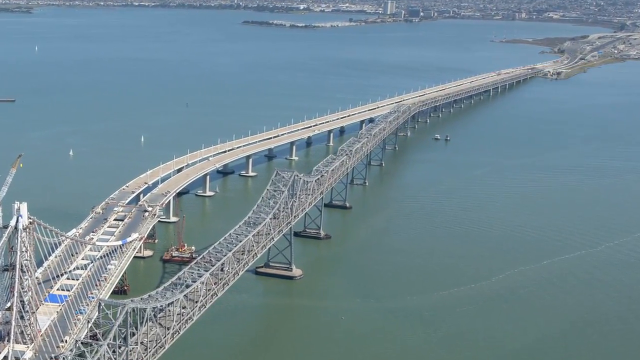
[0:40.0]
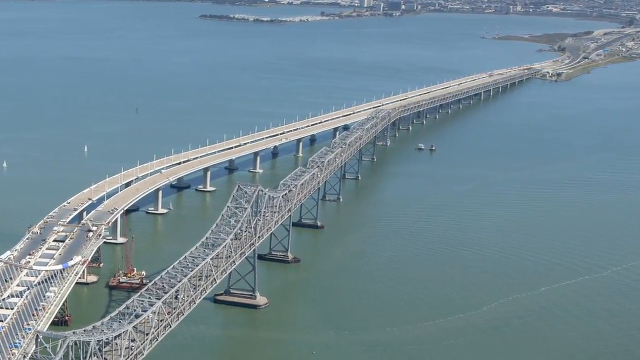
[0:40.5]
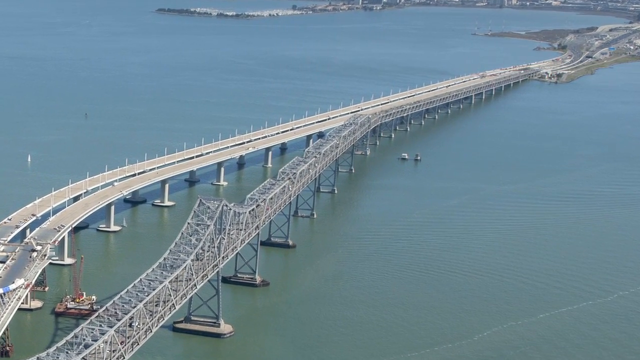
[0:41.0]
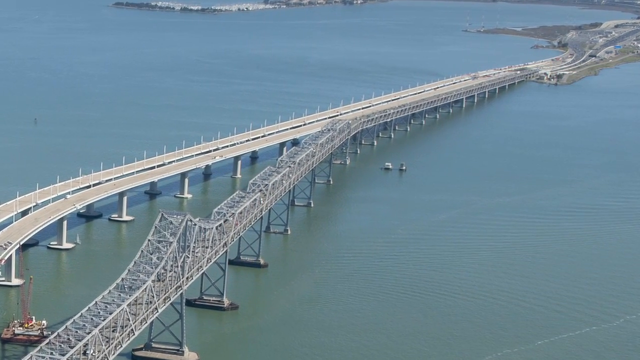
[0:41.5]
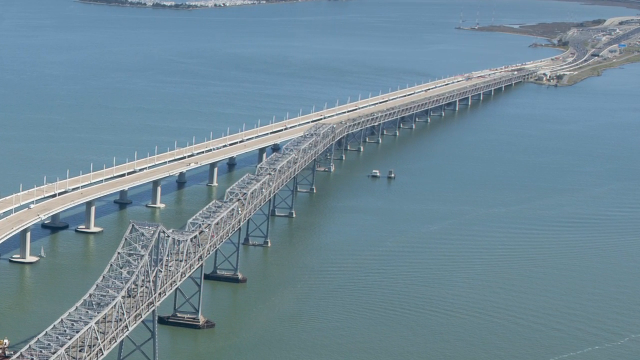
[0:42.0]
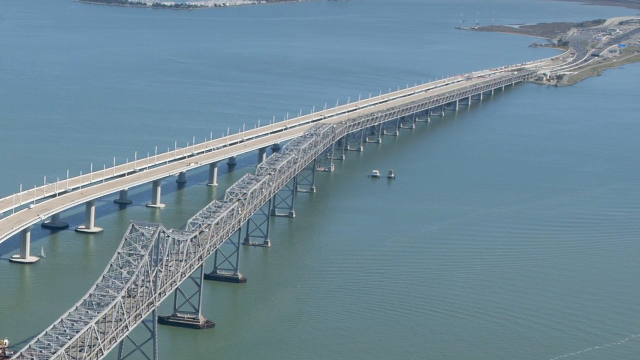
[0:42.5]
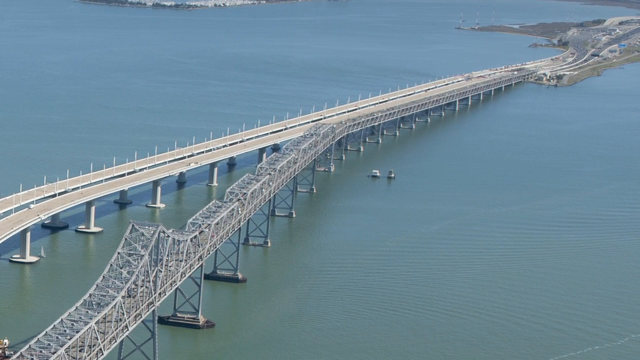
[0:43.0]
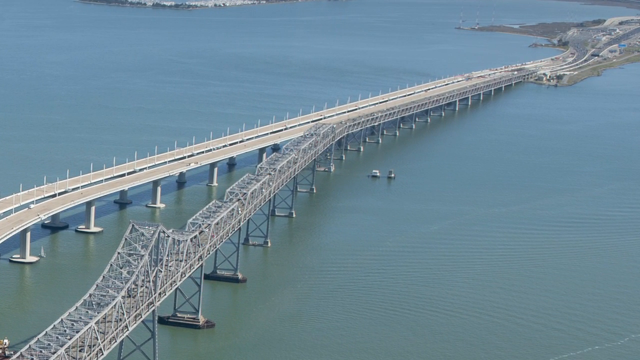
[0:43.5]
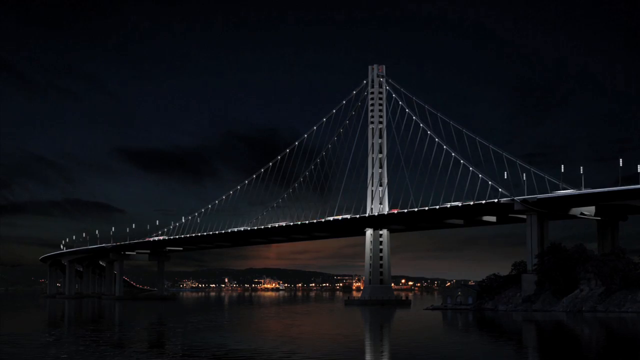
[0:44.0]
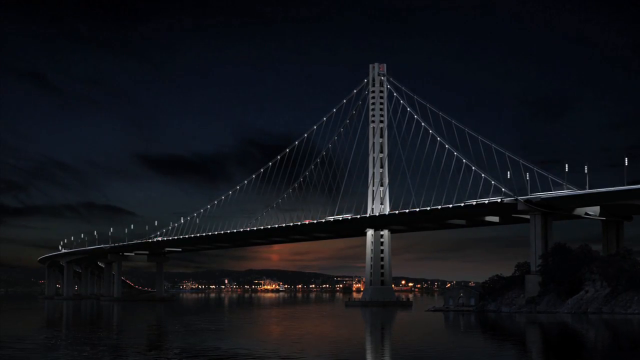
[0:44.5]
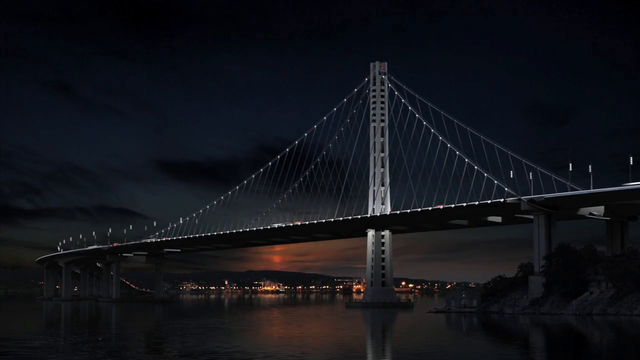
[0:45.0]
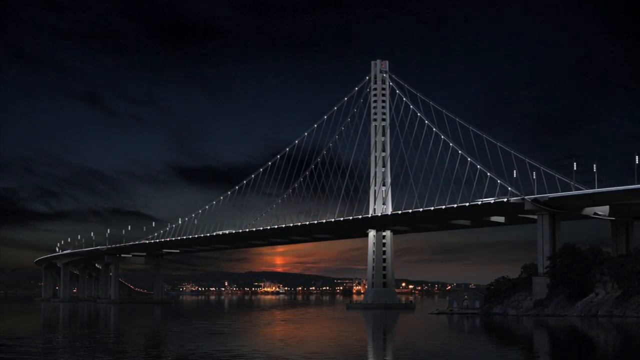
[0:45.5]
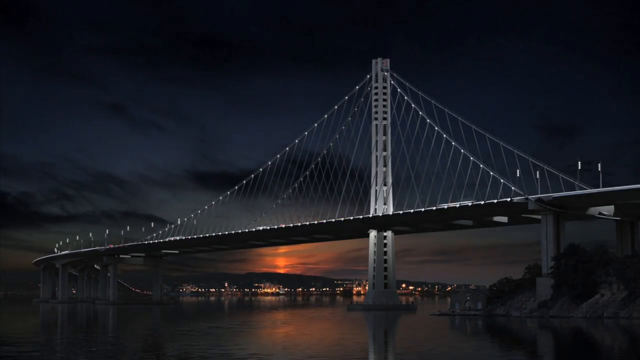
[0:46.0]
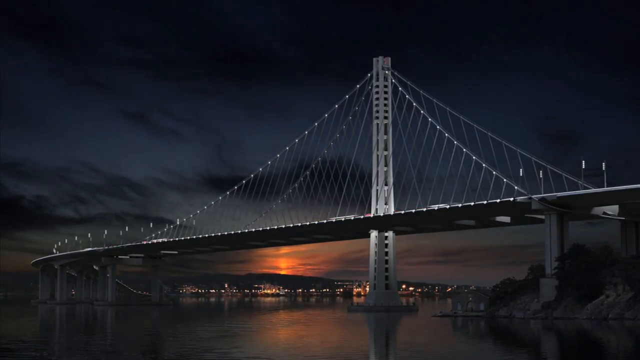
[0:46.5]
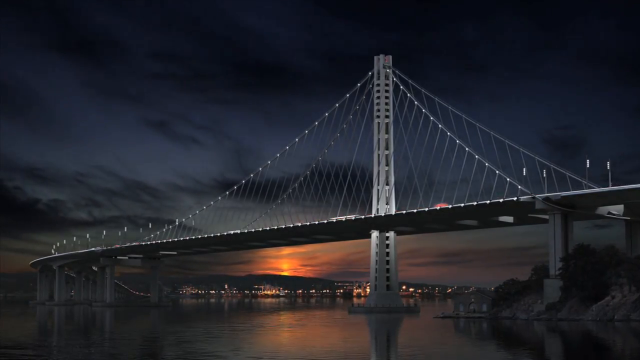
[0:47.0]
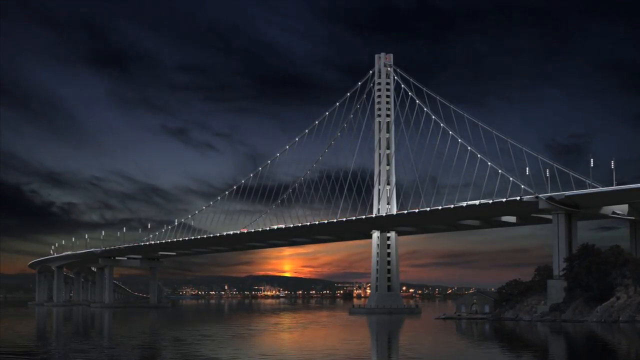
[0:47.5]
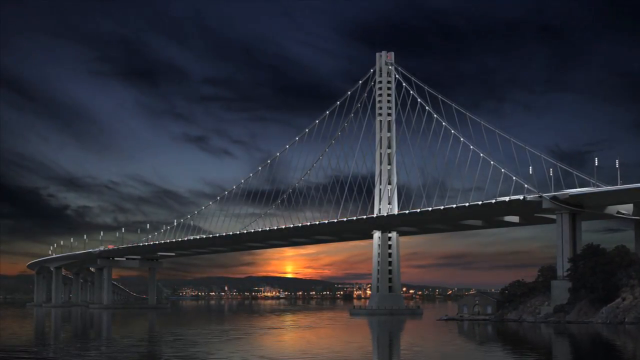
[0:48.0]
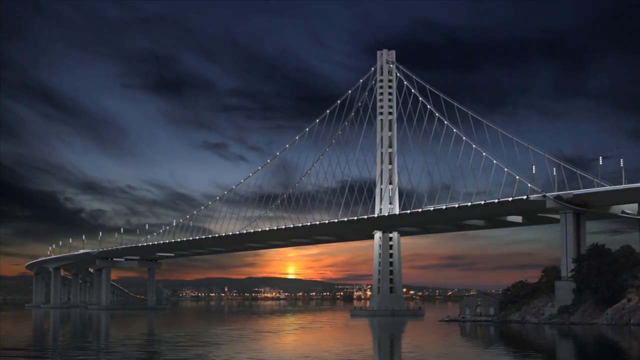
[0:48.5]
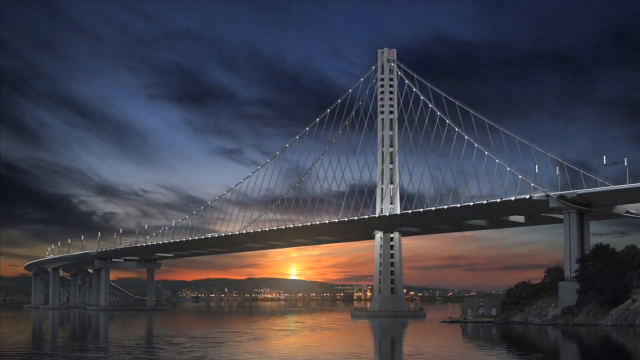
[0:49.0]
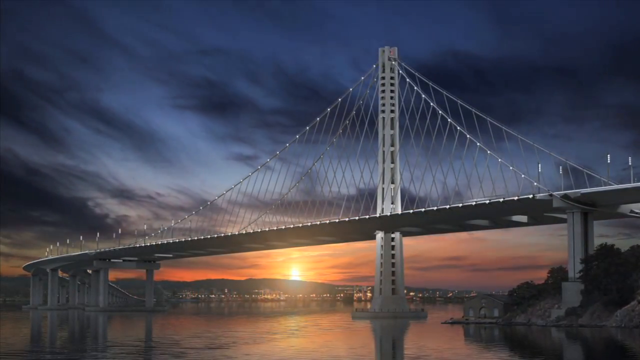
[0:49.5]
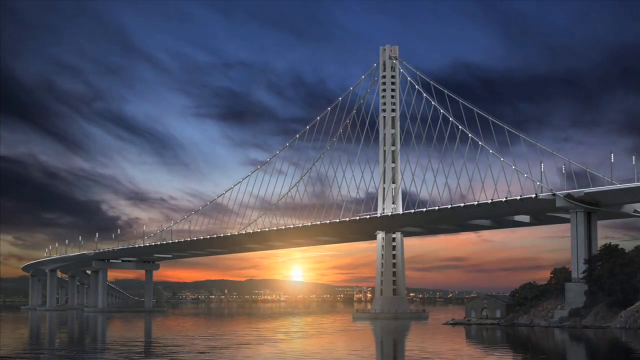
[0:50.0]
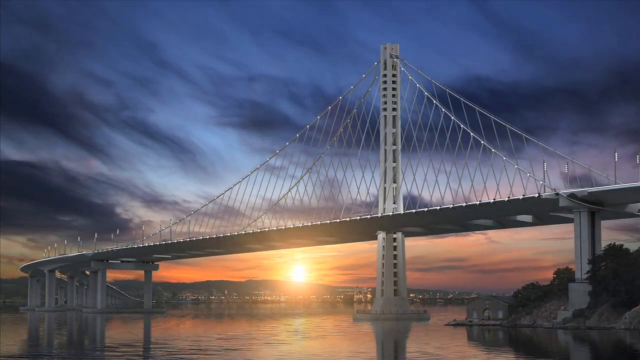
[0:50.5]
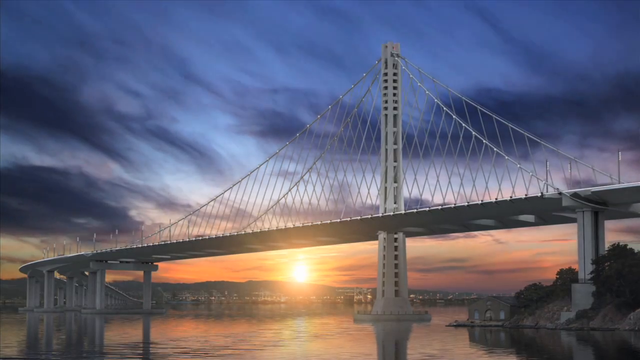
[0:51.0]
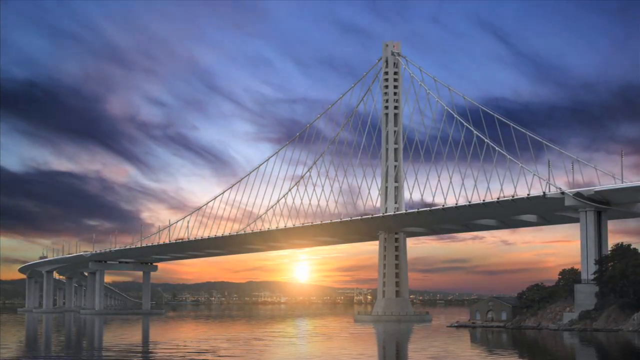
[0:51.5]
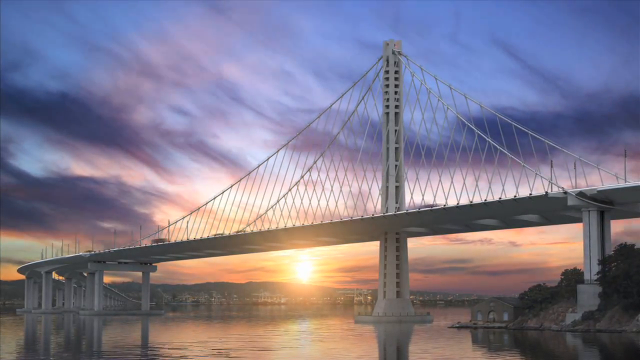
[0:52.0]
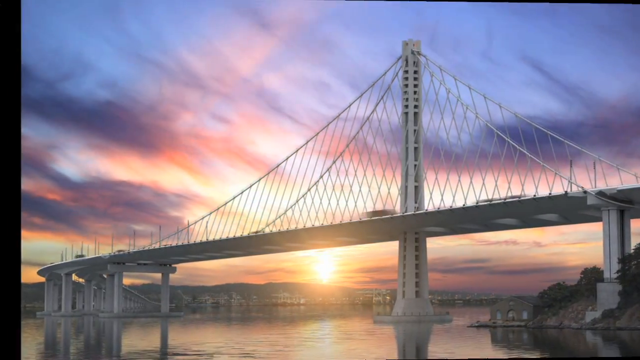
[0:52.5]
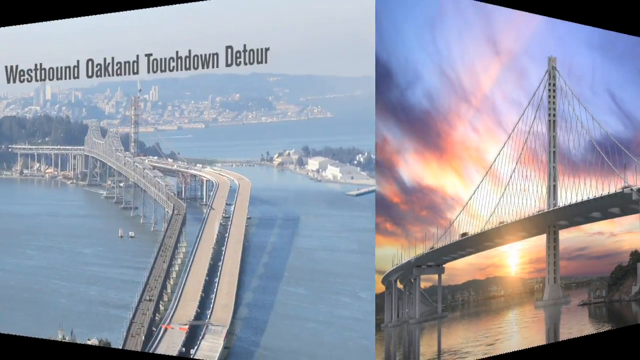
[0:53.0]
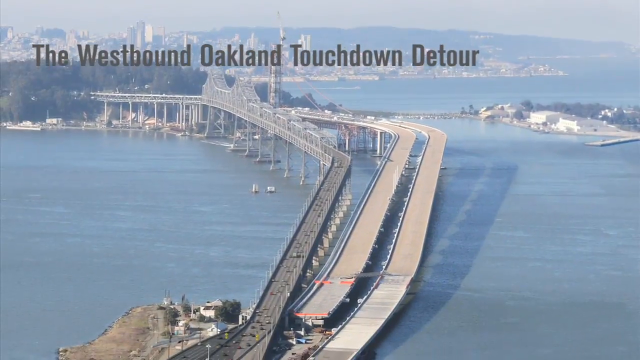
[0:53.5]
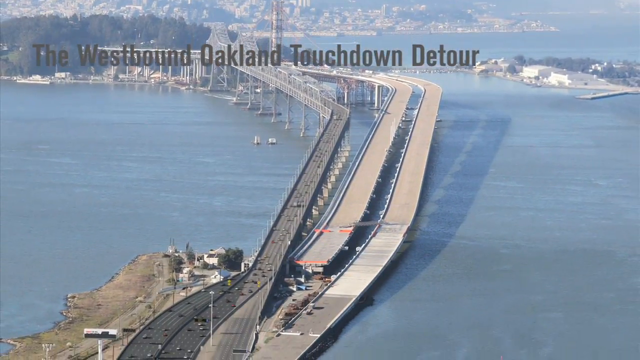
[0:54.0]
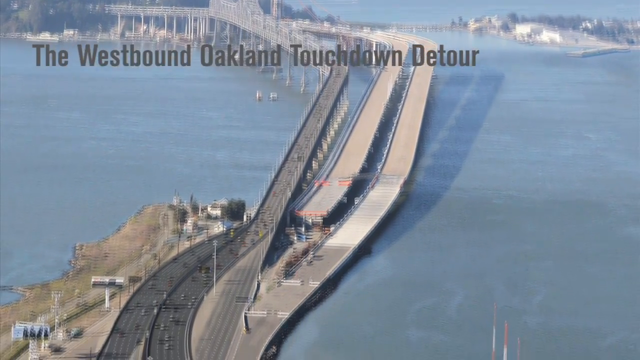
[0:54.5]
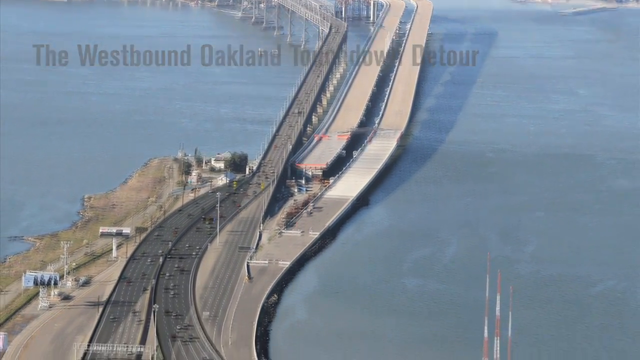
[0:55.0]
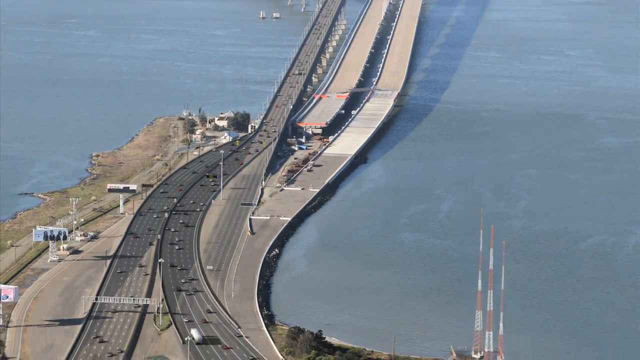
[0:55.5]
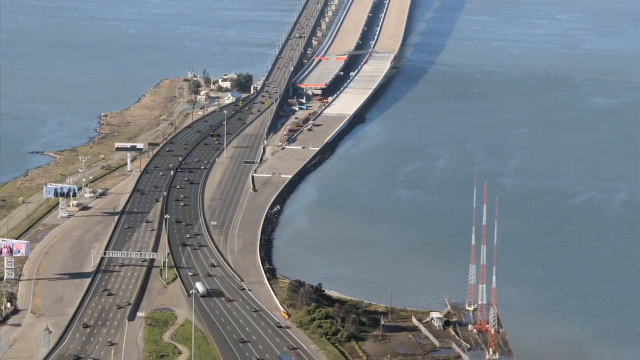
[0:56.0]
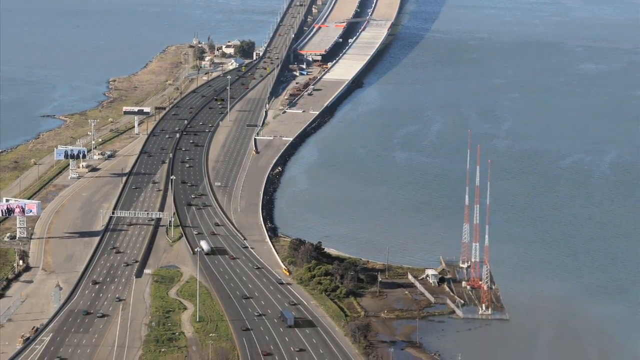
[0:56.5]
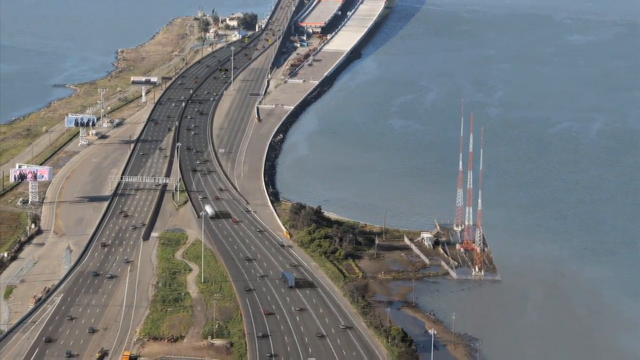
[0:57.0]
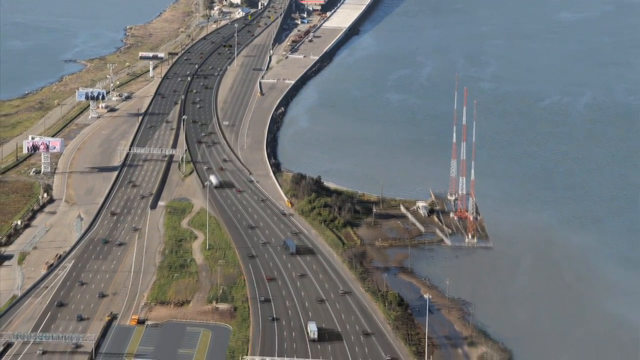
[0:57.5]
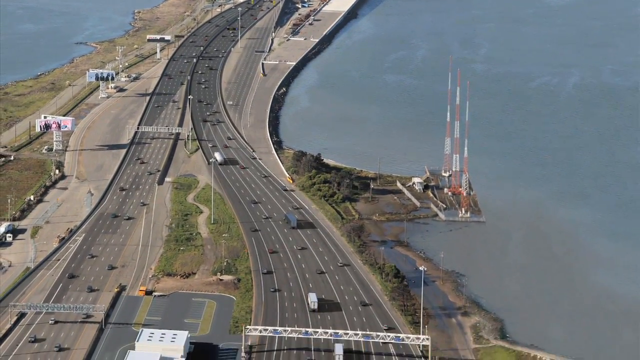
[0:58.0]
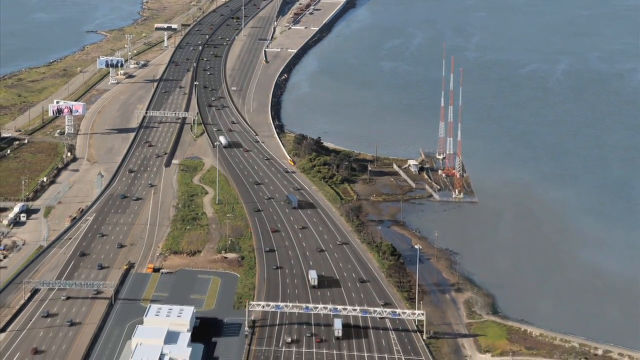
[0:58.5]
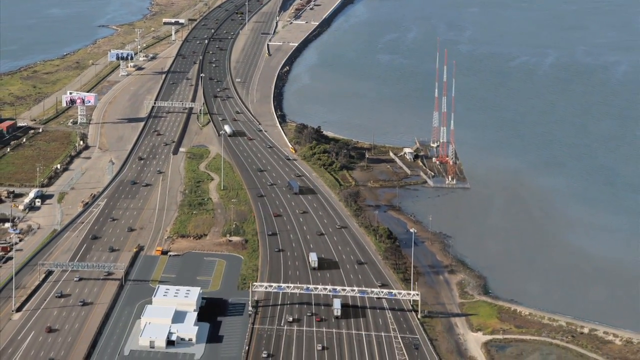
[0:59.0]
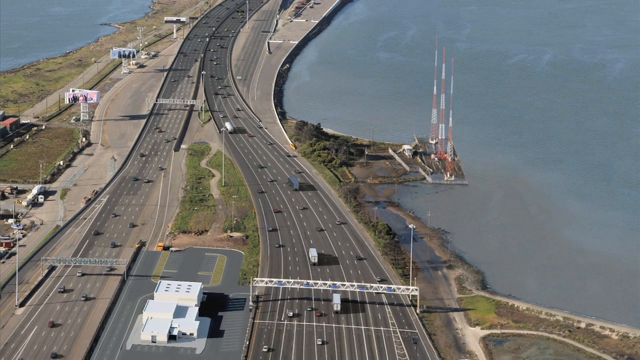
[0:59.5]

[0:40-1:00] The bridge remains in view as the camera approaches its right side. Then a fast-motion or time-lapse sequence shows another bridge, possibly the same one, though it looks a little different and the three tracks are not visible. It is night, with a little sunlight coming out in the background, while everything else is dark and cloudy. The lights of passing cars are visible, and the camera angle stays low, seemingly close to the water. The sun comes out and gives more light until it becomes day. Next, an image shows the streets that lead to the bridge, with several cars driving and reaching the bridge. The streets are completely curved rather than straight. Near the water there are several details, such as antennas, sections with railings, and some ads and signs on the left side.